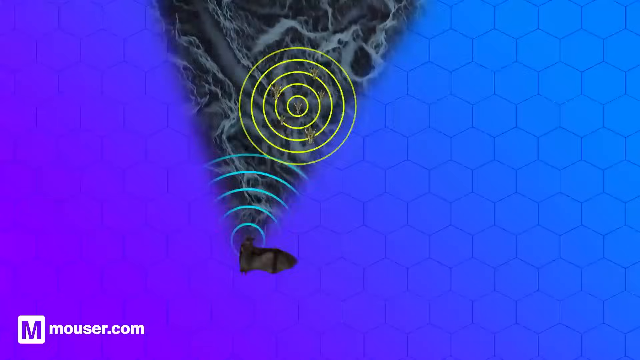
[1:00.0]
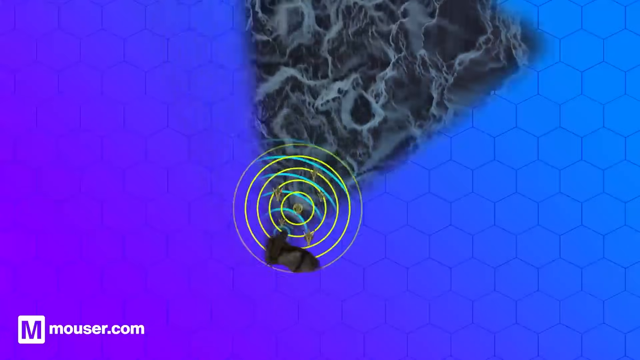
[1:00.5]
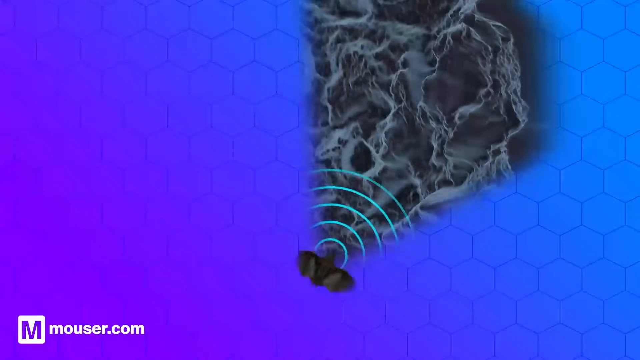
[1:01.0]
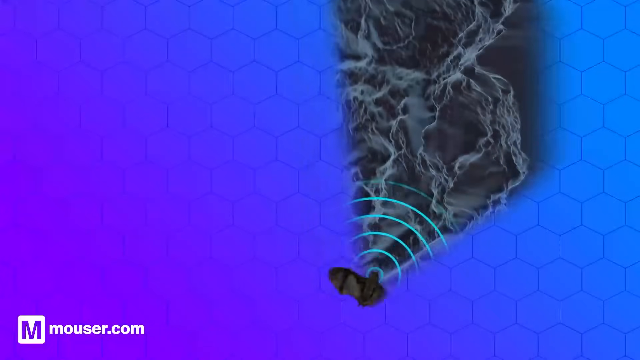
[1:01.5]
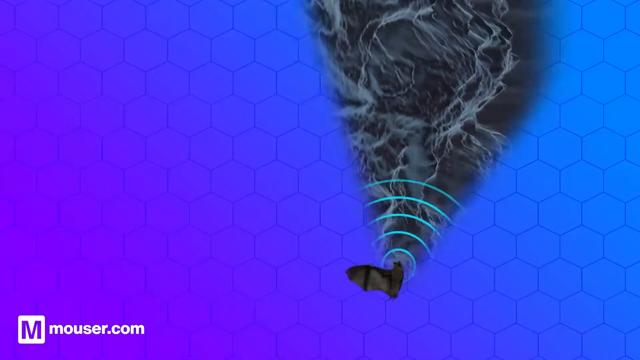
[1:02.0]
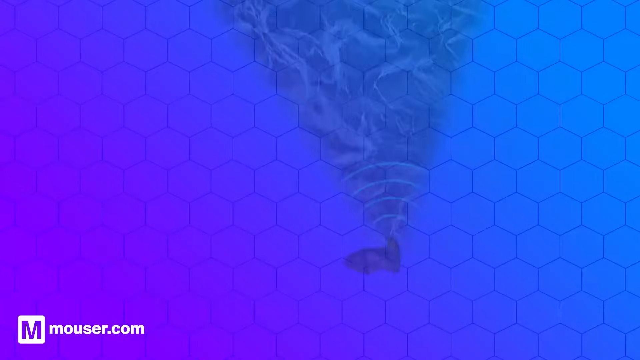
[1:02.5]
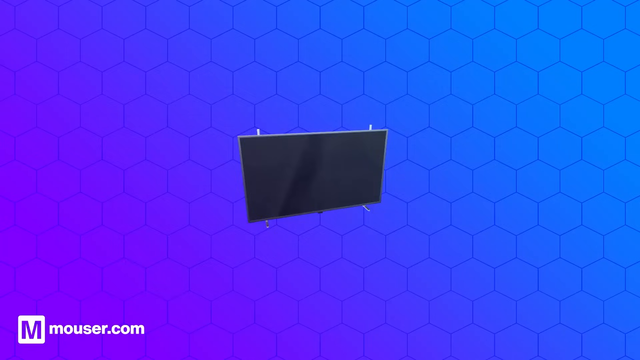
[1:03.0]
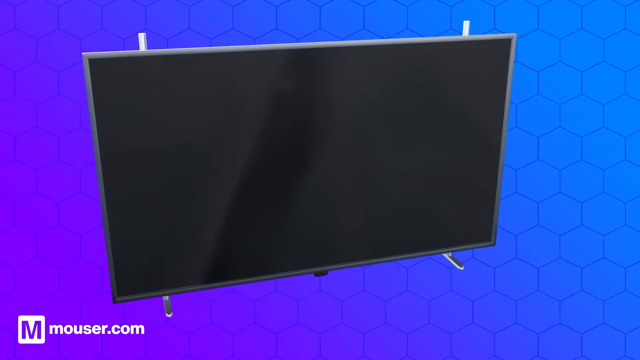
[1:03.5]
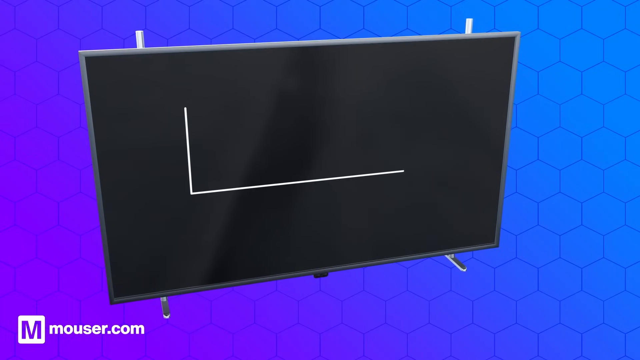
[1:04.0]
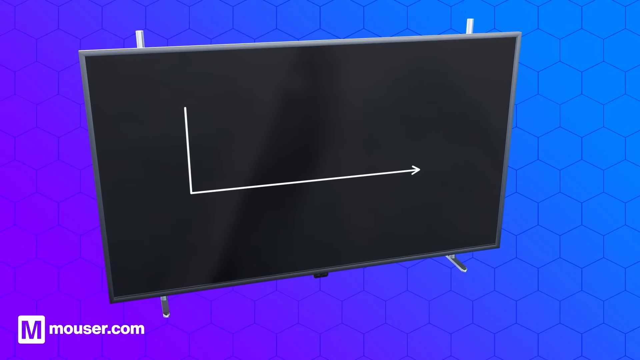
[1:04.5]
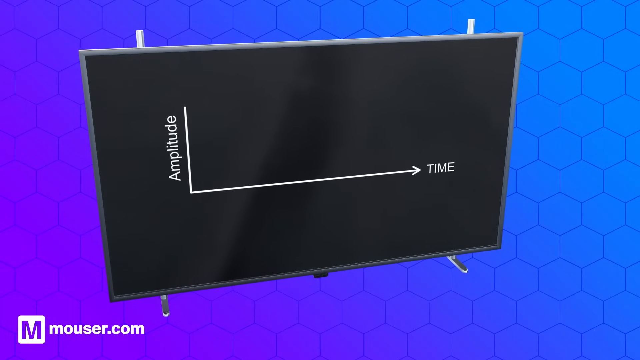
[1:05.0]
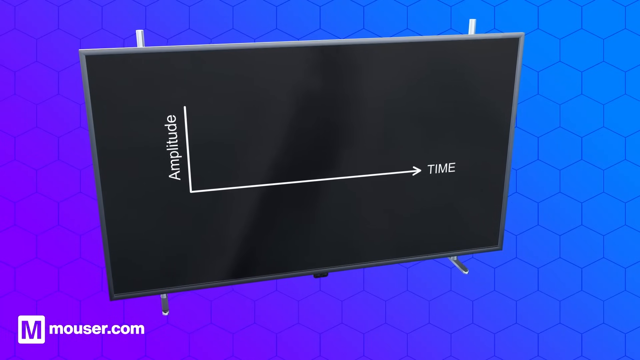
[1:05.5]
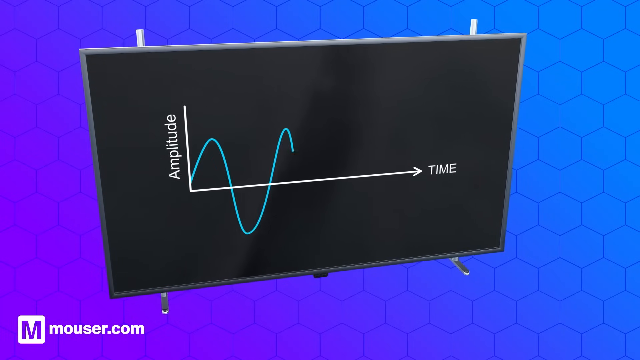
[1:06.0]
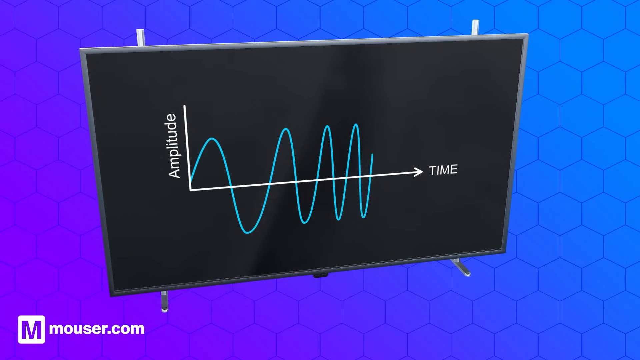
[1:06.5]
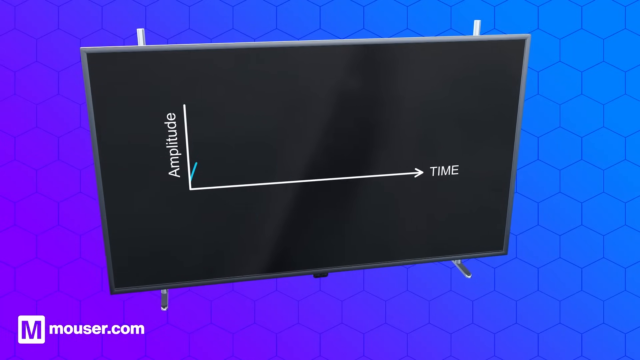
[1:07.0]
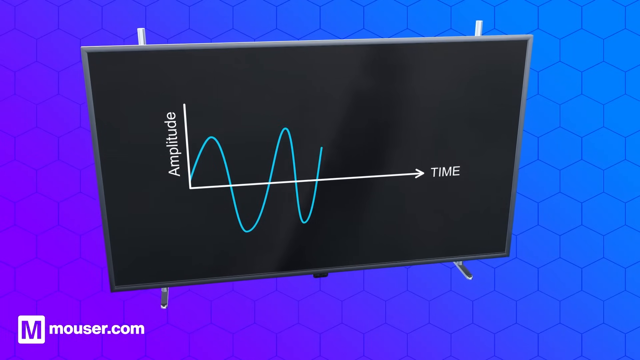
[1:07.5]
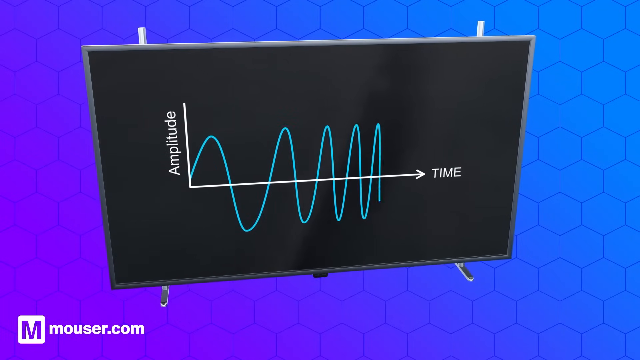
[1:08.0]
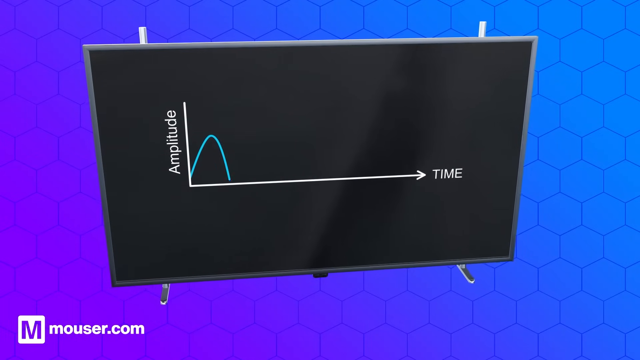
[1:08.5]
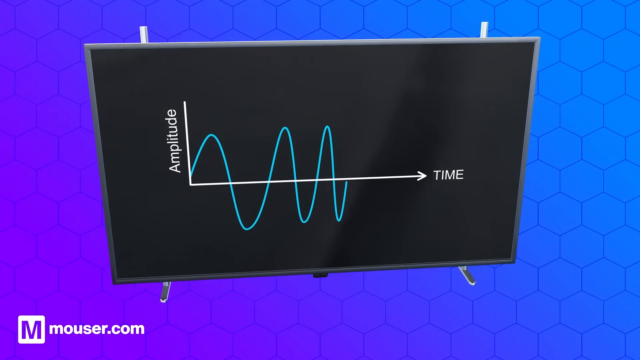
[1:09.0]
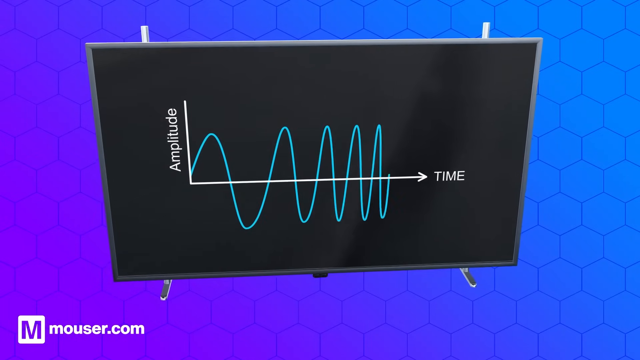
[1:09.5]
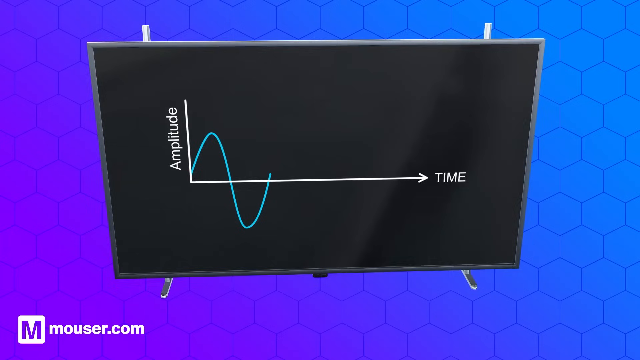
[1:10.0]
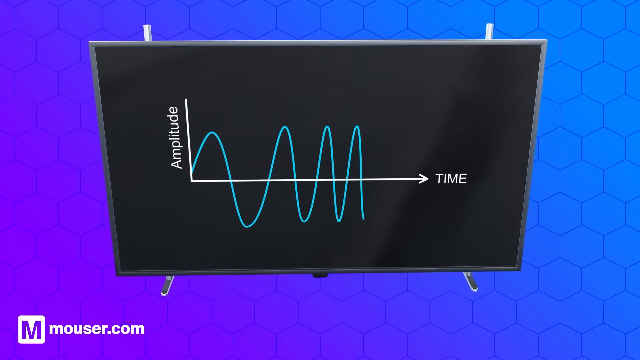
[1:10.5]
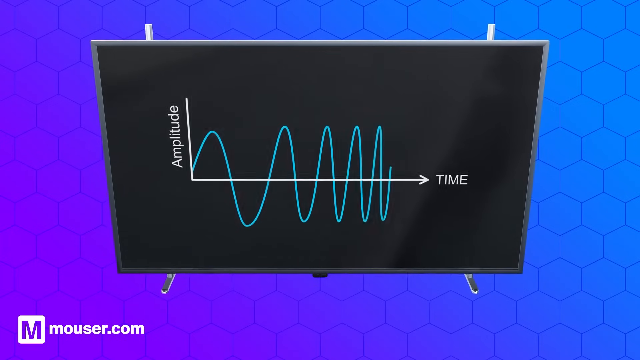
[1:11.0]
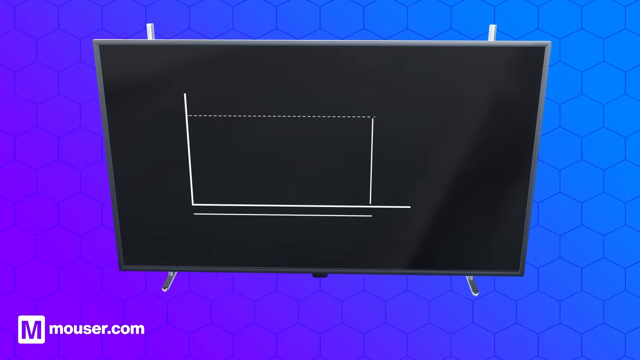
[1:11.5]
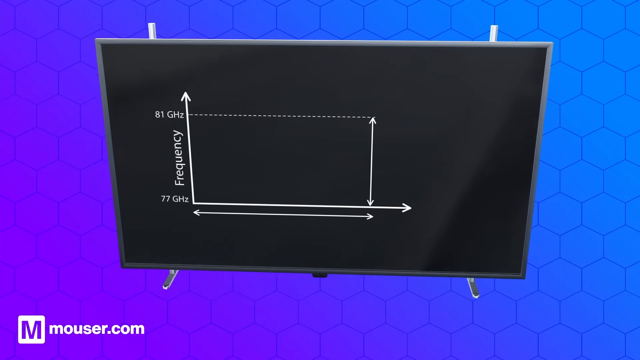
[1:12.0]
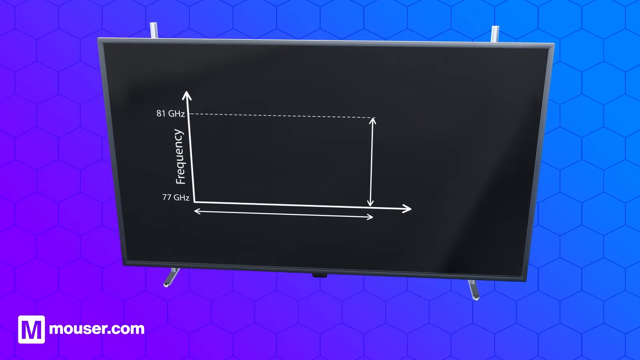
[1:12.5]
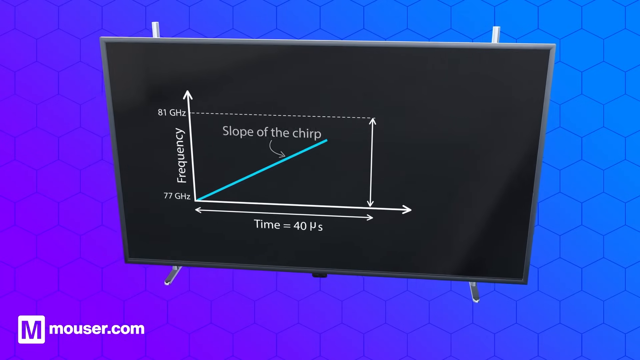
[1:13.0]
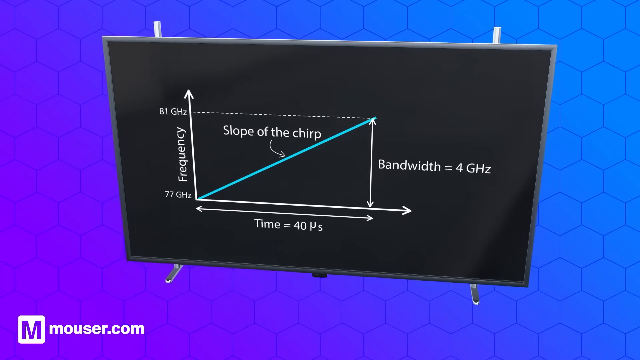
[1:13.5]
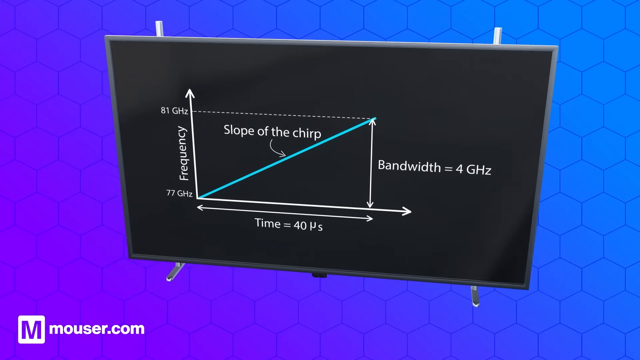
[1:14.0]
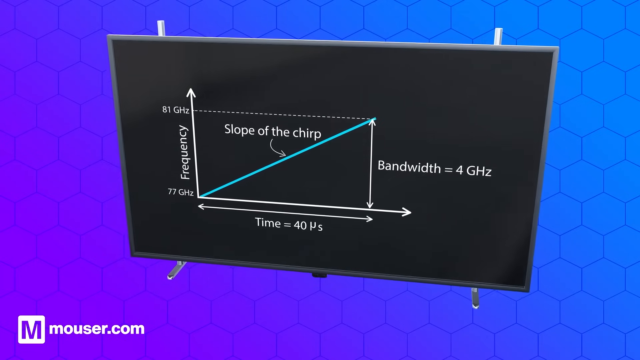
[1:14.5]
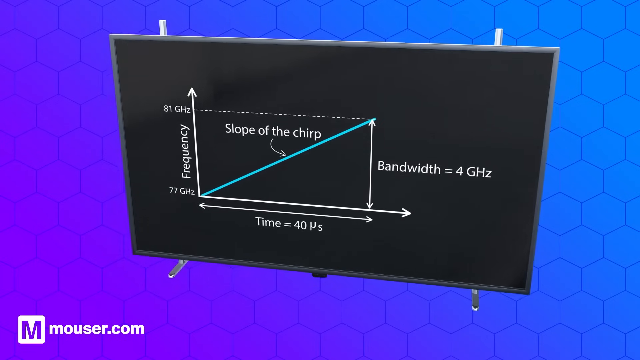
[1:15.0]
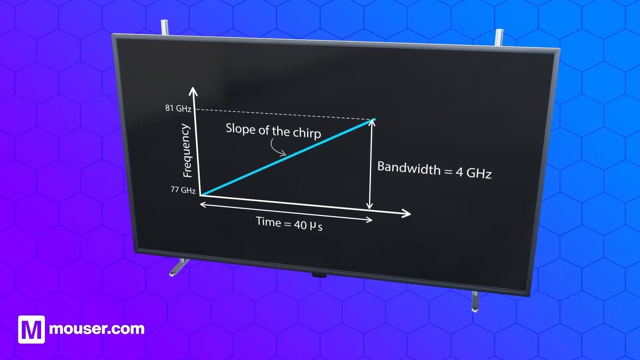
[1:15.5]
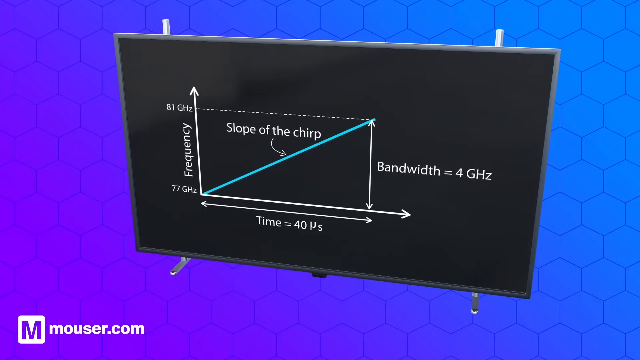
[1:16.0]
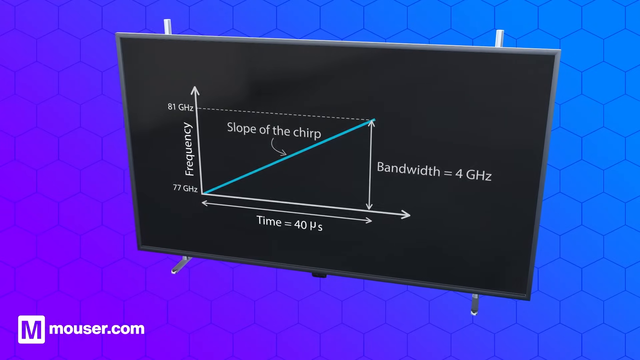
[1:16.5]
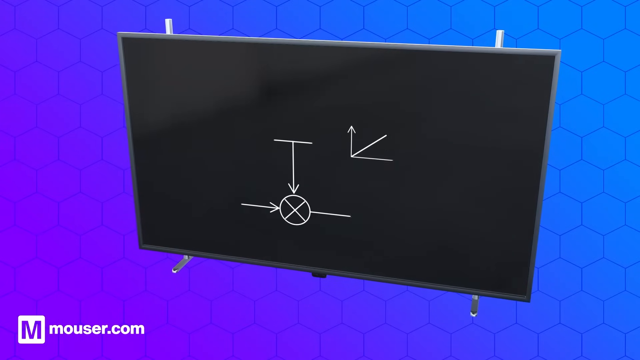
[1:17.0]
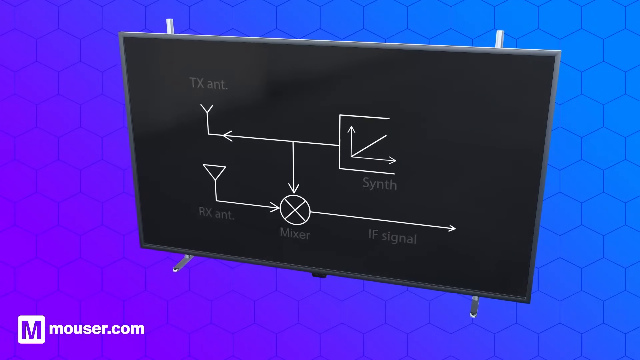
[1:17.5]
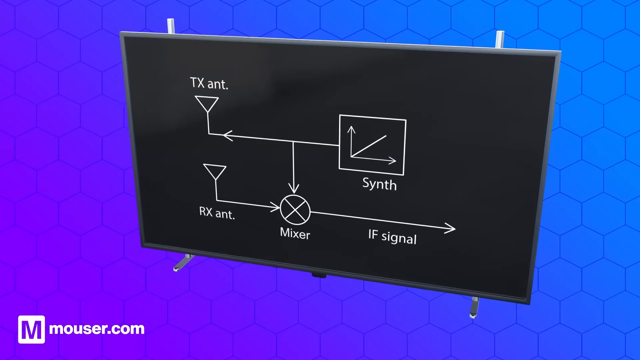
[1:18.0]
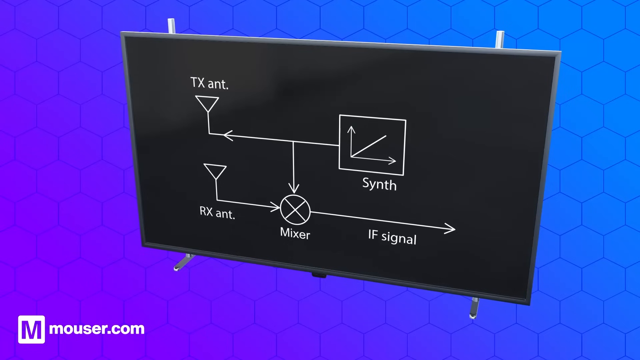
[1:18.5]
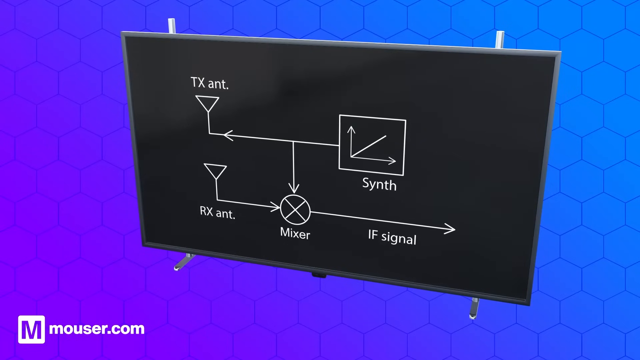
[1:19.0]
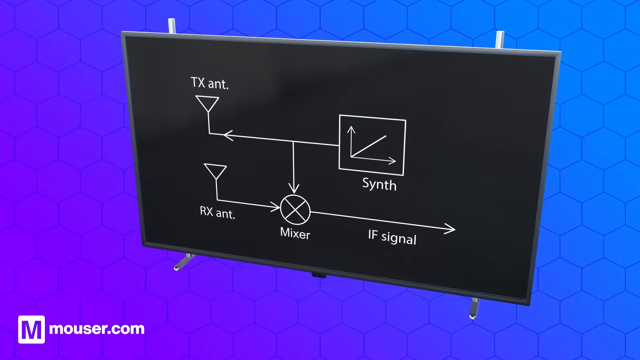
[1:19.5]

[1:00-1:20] On a blank blue screen with a barely visible honeycomb pattern, a small black bird flies all over the screen, appearing to emanate a radio signal. Neon green lights and yellow signals come from the bird, and a smoky-like substance appears on the screen as well. "Mouser.com" is written in white in the lower left-hand corner. After several seconds, the scene cuts to an image of a TV monitor showing a graph with the word "amplitude" on the vertical axis and the word "time" on the horizontal axis, with an arrow pointing to the right. A squiggly blue line runs from left to right across the time axis. A more detailed graph follows, showing time and frequency as well as the slope of the chirp, with the text "bandwidth equals four gigahertz." Several other diagrams are then shown.